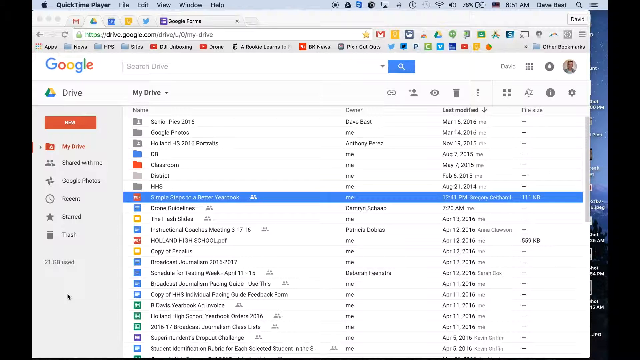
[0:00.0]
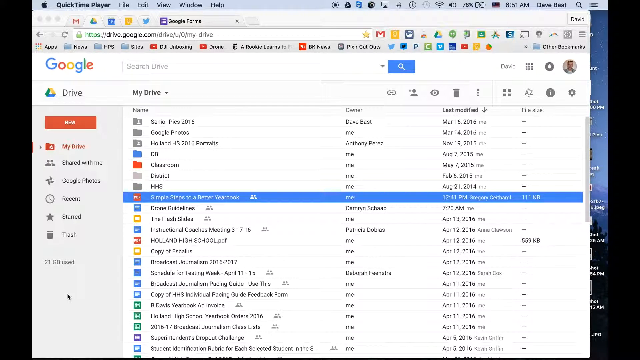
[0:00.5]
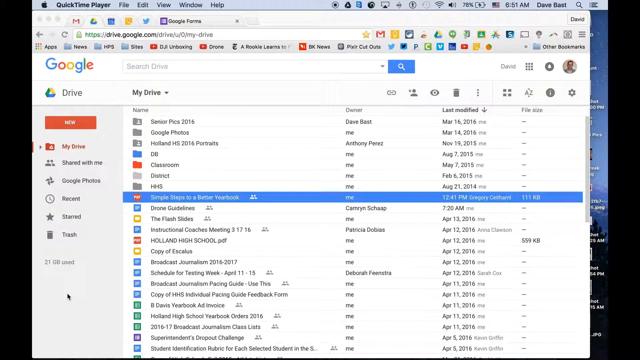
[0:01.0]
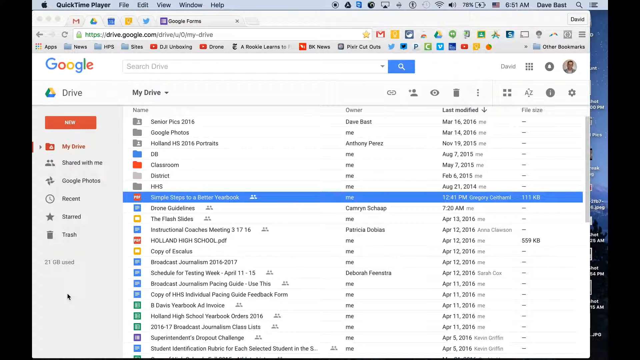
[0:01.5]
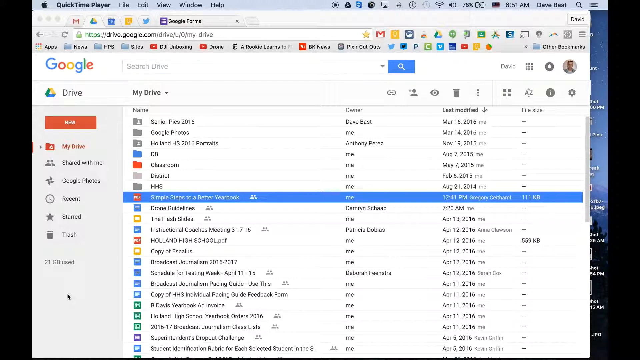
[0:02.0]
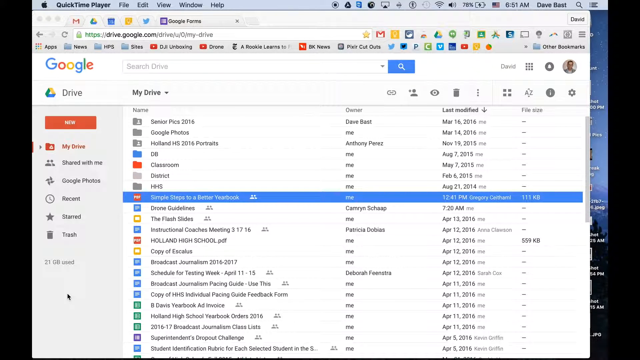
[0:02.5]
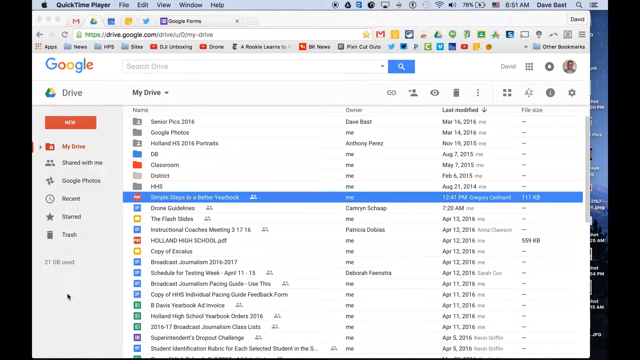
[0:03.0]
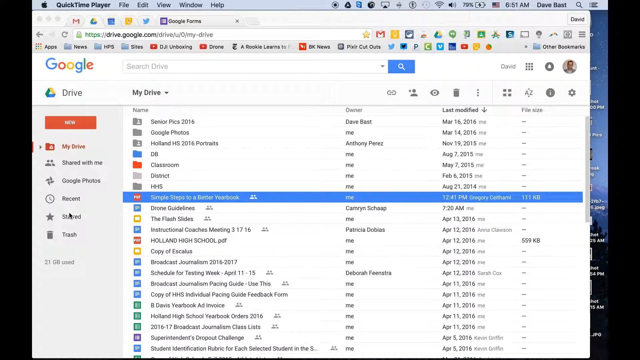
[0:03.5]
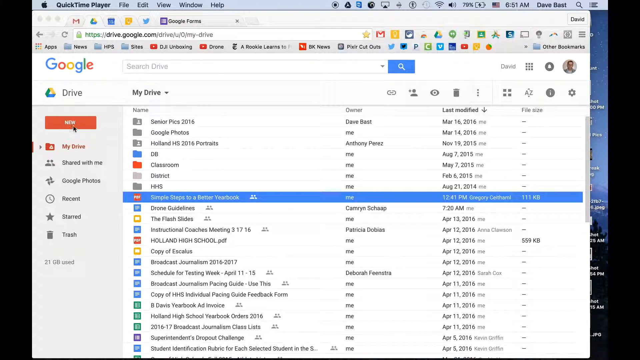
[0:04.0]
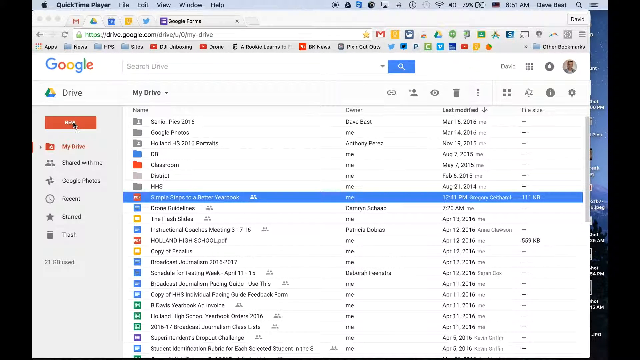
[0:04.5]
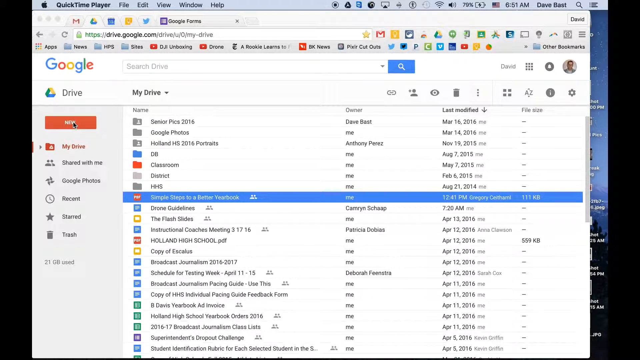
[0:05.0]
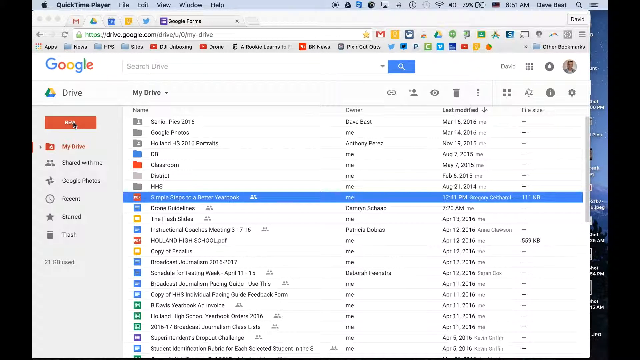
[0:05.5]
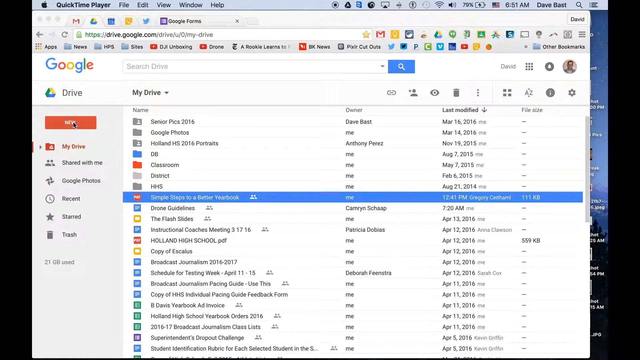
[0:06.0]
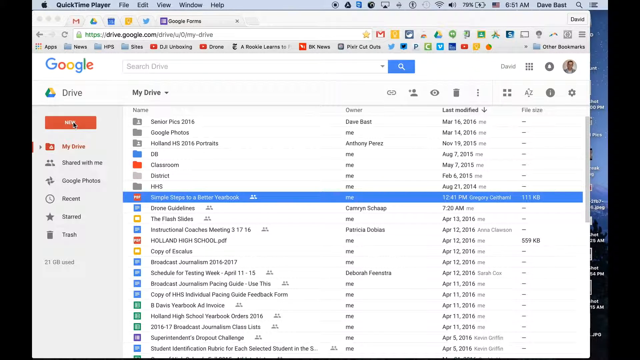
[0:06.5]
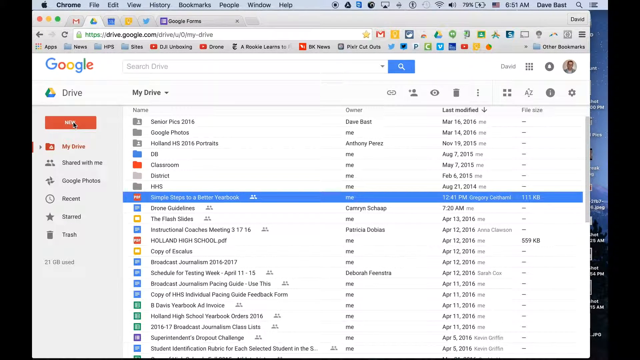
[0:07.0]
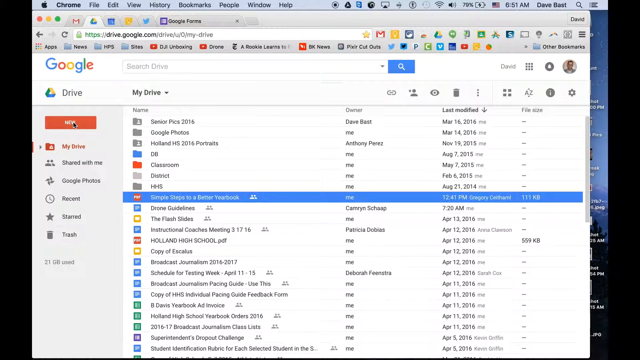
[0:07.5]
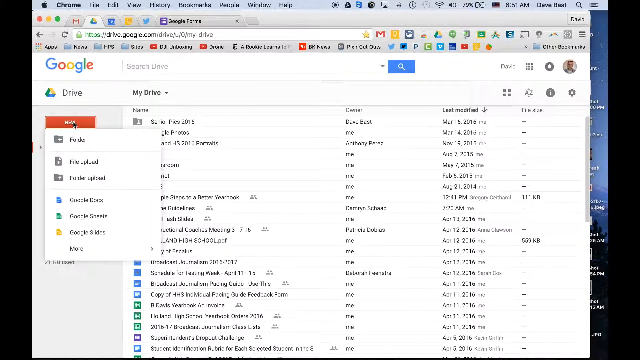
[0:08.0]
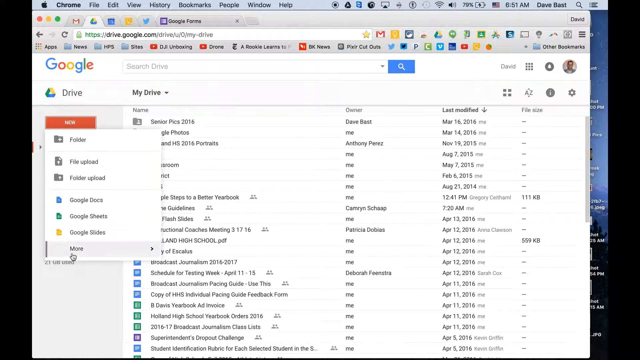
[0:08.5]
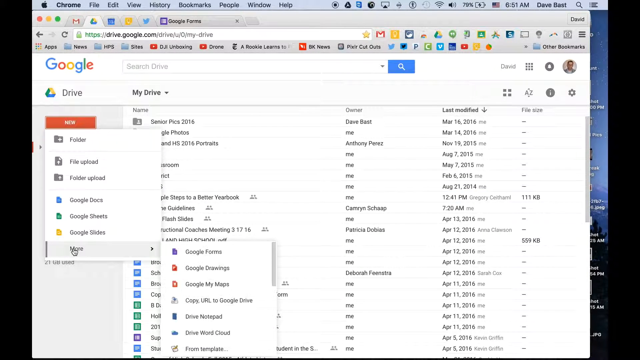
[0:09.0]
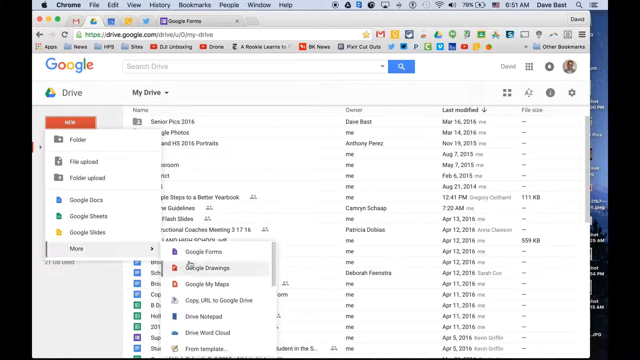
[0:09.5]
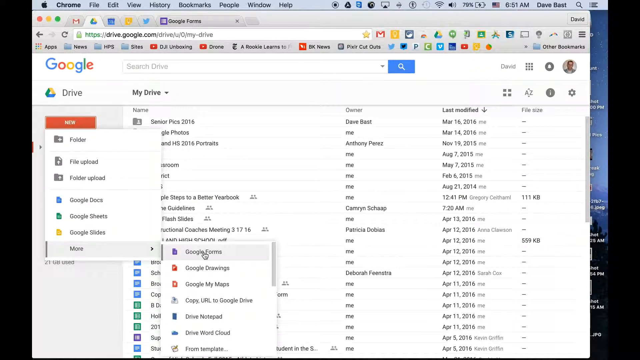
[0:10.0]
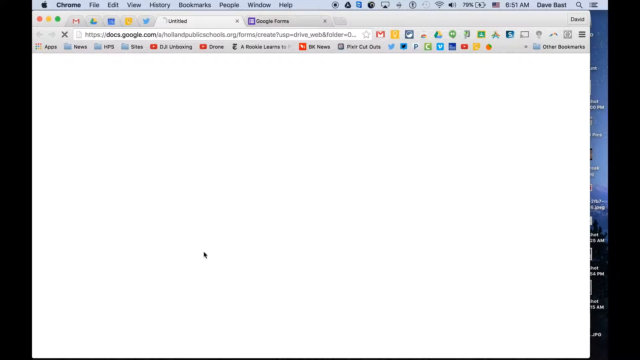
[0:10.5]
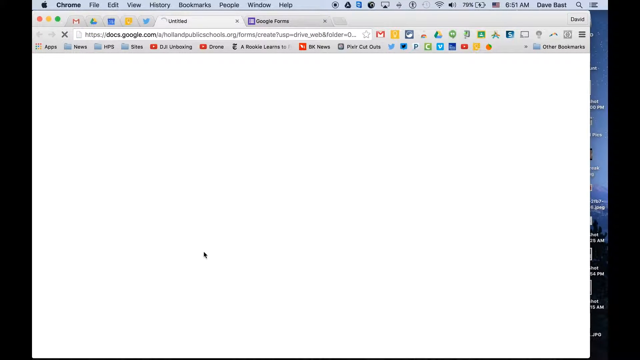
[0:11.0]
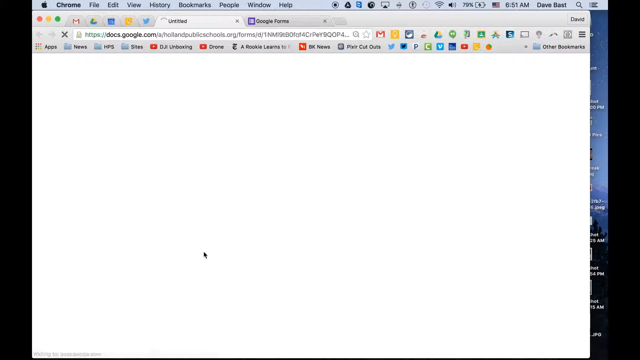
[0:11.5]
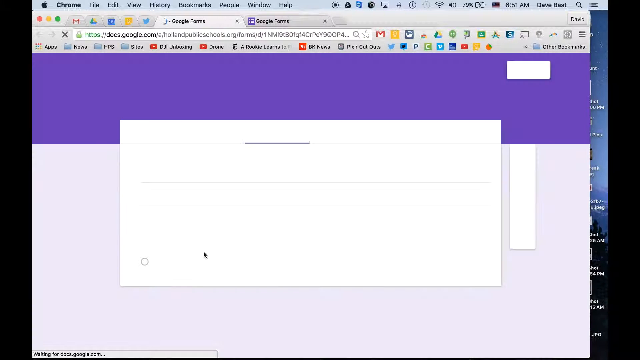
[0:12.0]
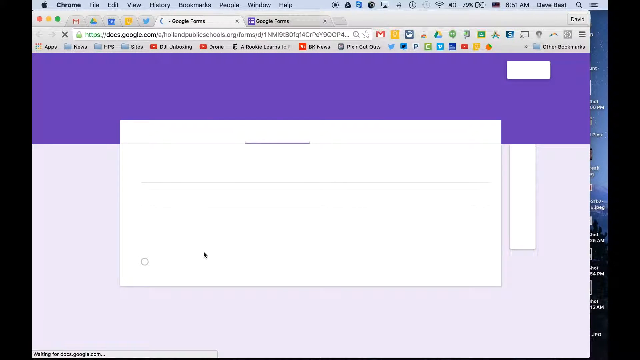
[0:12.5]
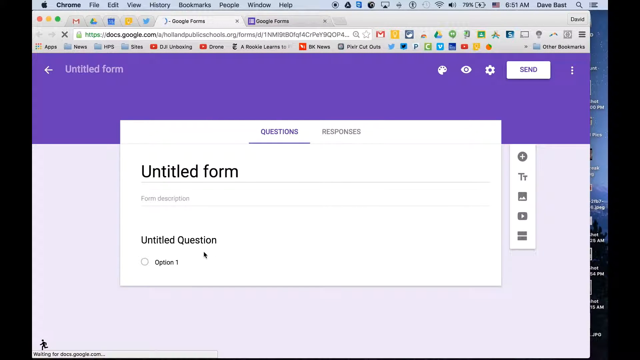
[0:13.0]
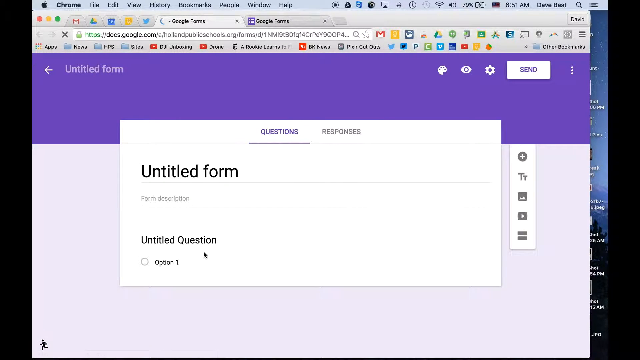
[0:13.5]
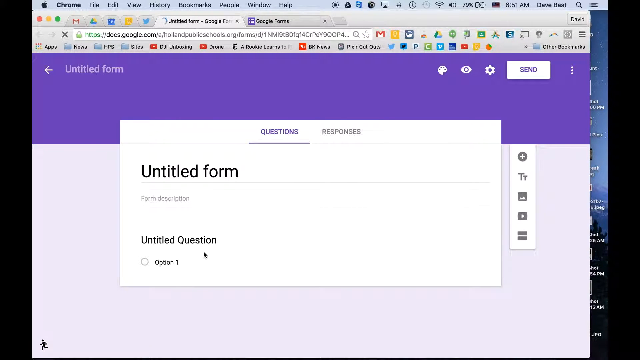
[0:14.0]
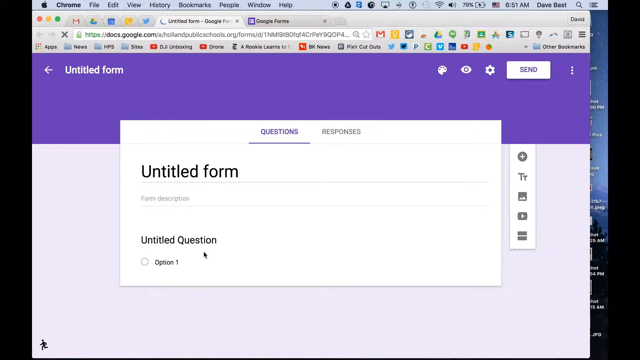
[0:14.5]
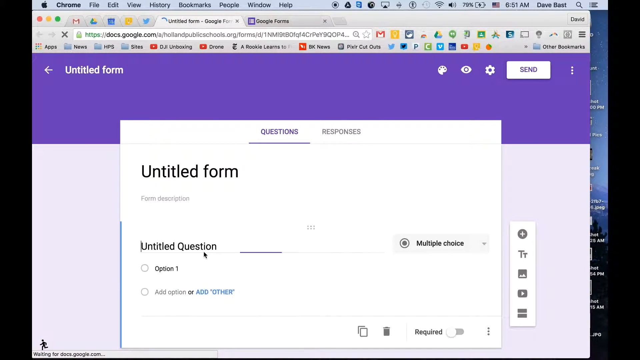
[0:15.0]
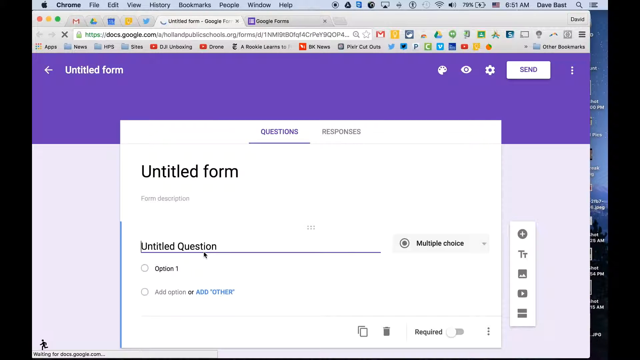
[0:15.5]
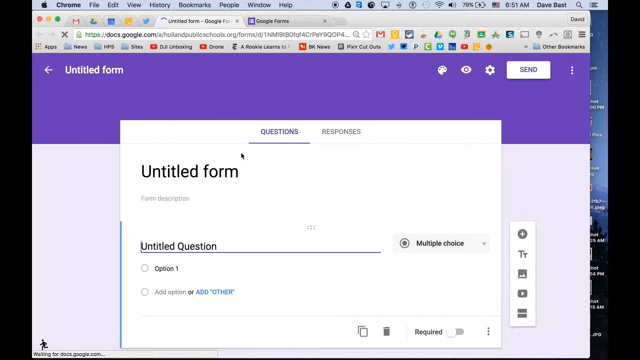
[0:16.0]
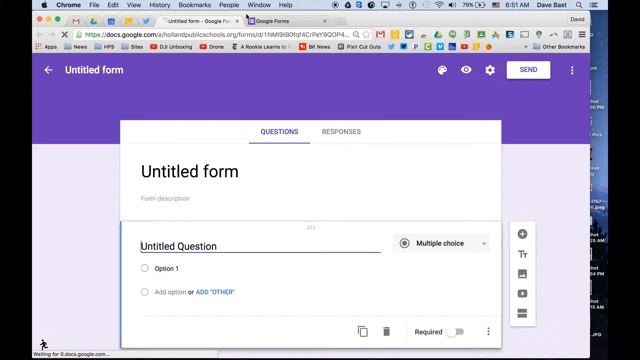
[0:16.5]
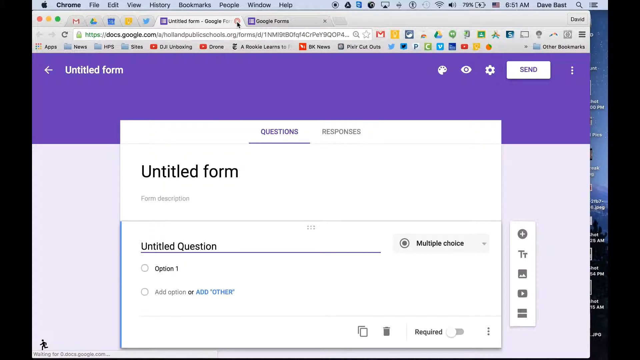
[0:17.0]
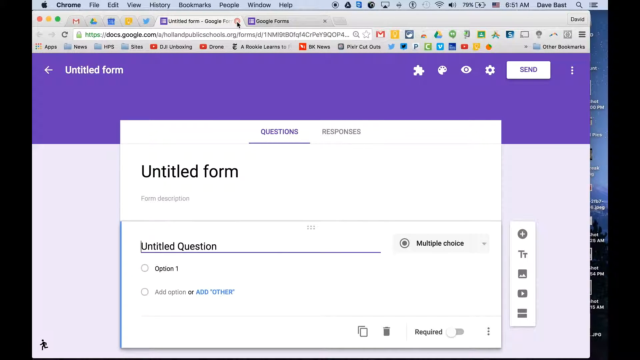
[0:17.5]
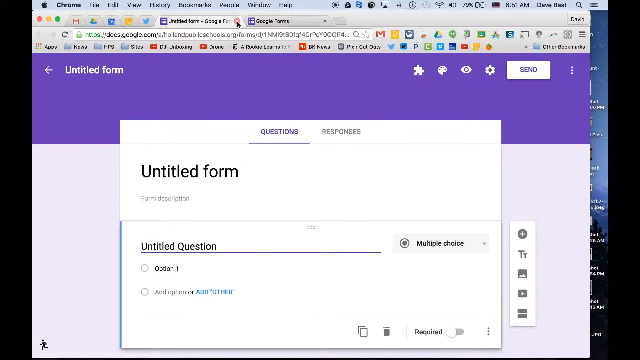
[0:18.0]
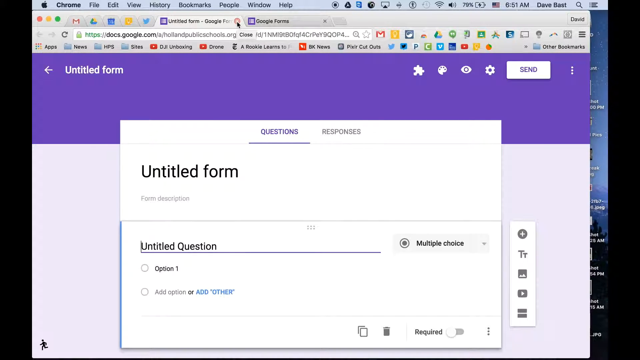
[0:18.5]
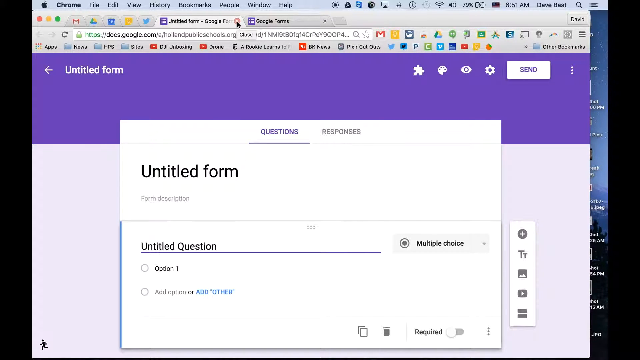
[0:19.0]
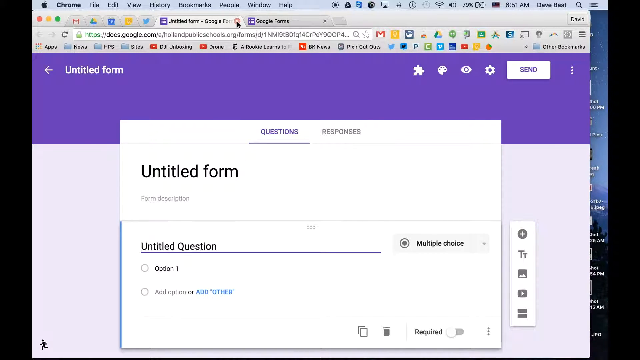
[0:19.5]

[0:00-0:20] A Google Drive is shown on what appears to be a MacBook-style interface, with "Chrome" at the top. The screen is very busy: there are many tabs, many bookmarks, and many files in the drive. Most of the files are dated 2016, with some from 2014, so the video is probably from around 2016. A person's name is visible at the top right. From the drive, a Google form called Simple Steps to a Better Yearbook is opened. An untitled form is then opened in what appears to be Google Forms, labeled publicschools.org, so it is probably a form for a school of some kind.